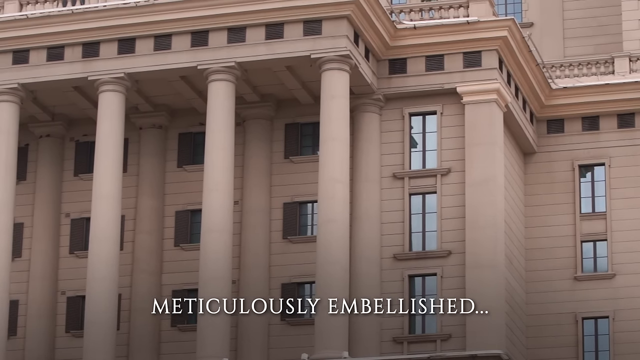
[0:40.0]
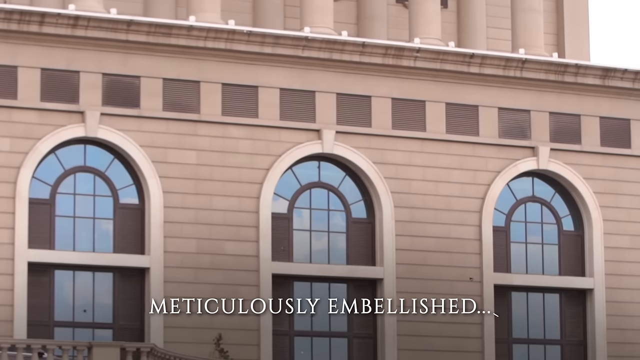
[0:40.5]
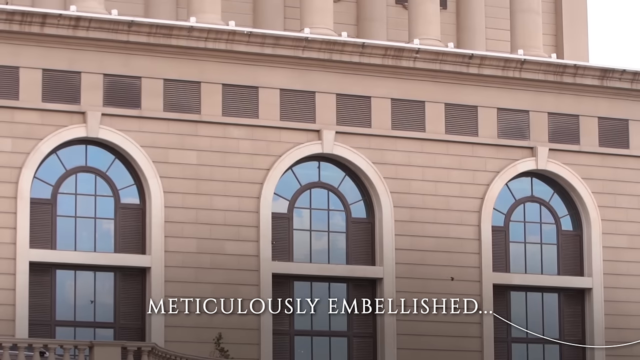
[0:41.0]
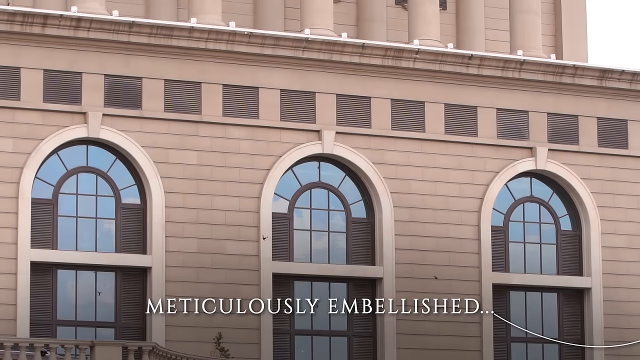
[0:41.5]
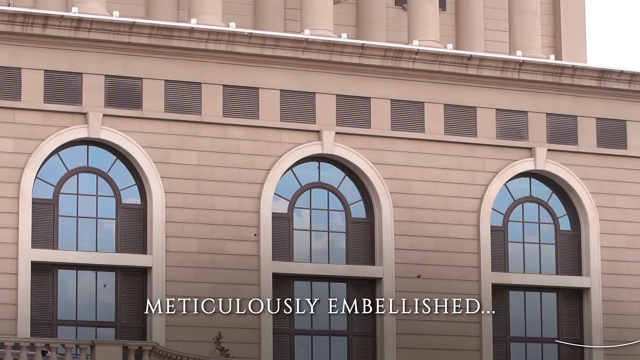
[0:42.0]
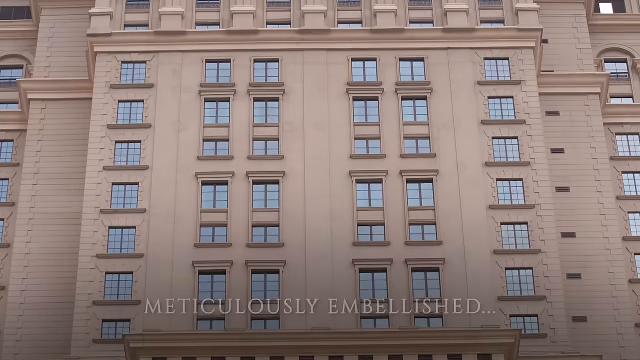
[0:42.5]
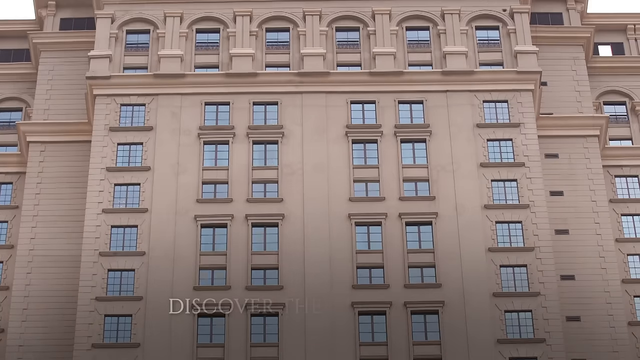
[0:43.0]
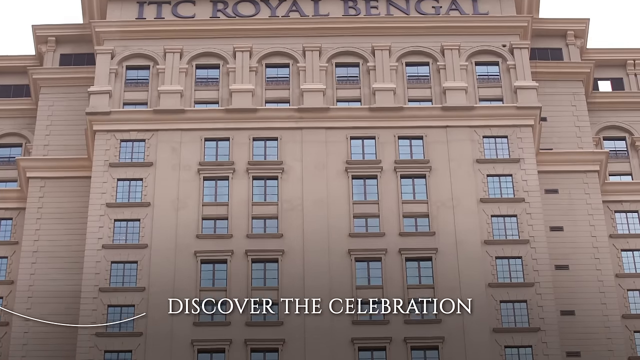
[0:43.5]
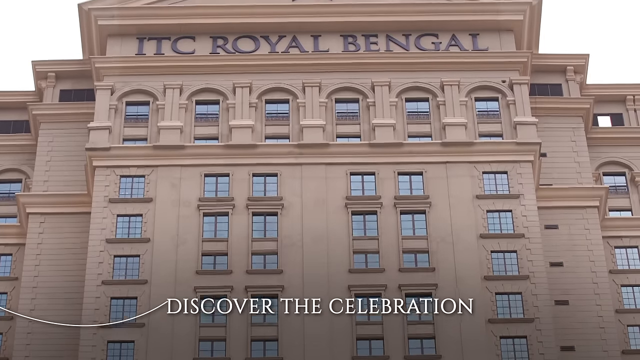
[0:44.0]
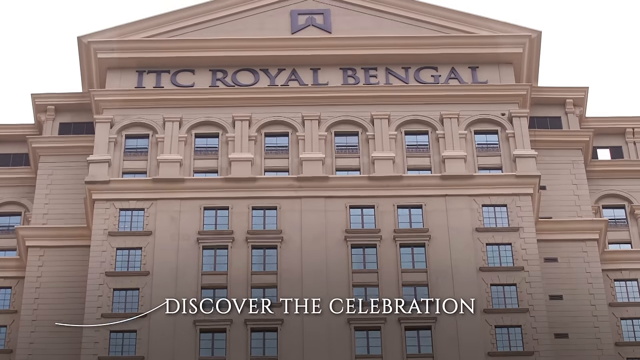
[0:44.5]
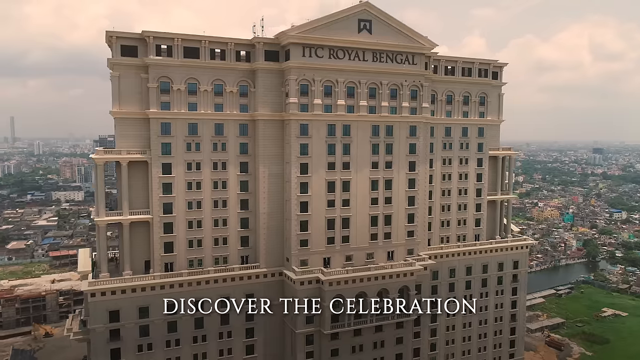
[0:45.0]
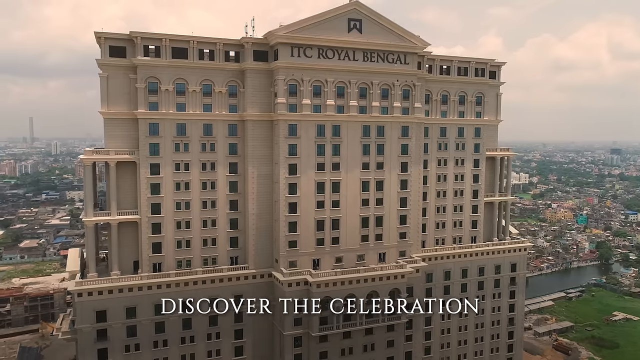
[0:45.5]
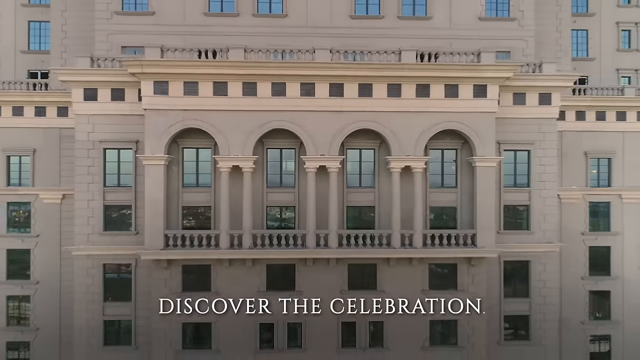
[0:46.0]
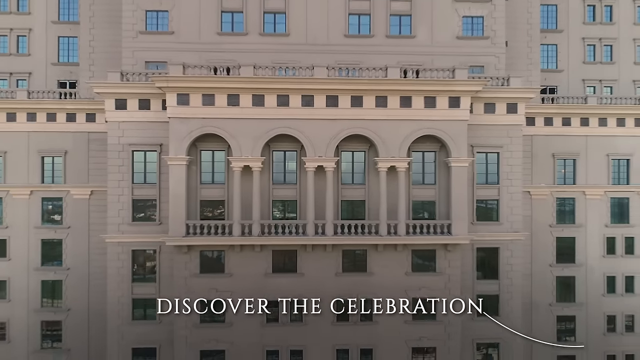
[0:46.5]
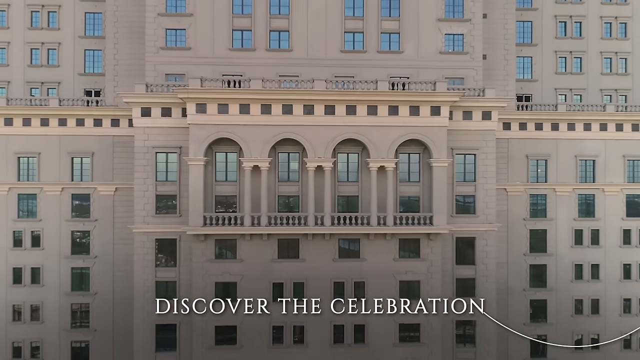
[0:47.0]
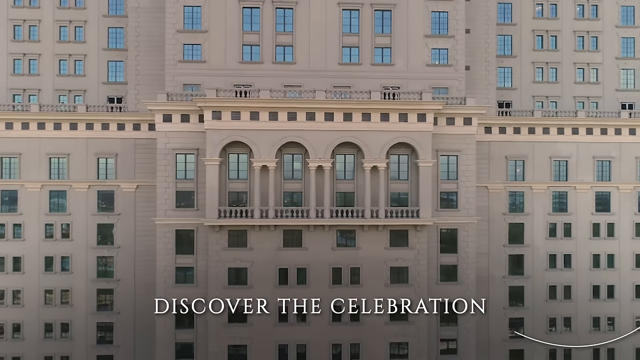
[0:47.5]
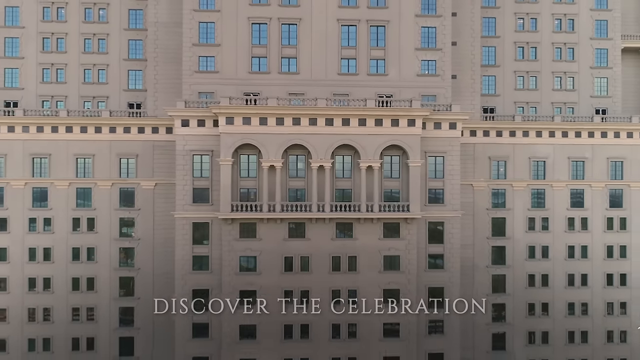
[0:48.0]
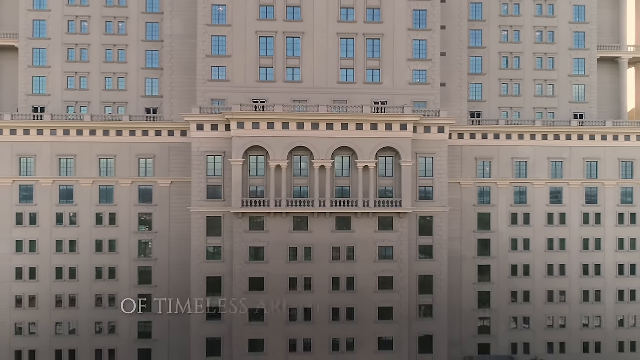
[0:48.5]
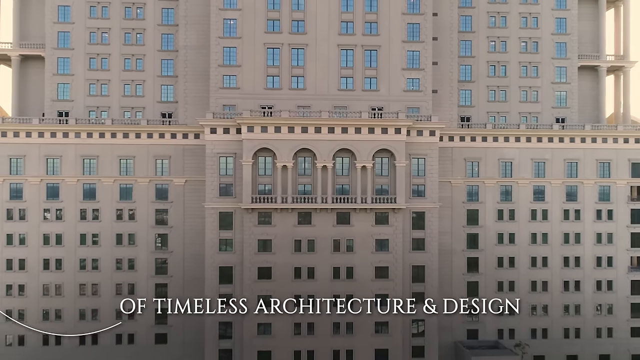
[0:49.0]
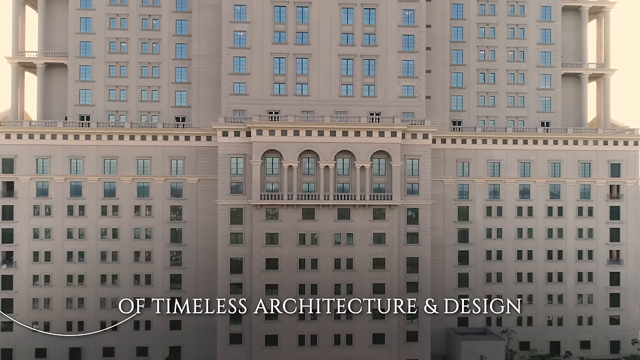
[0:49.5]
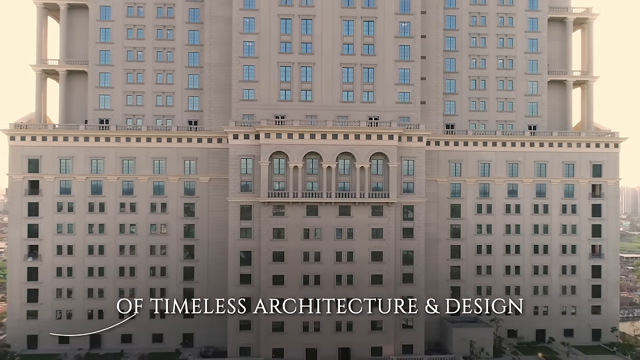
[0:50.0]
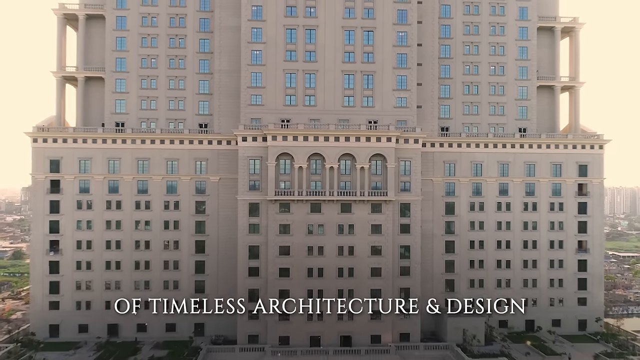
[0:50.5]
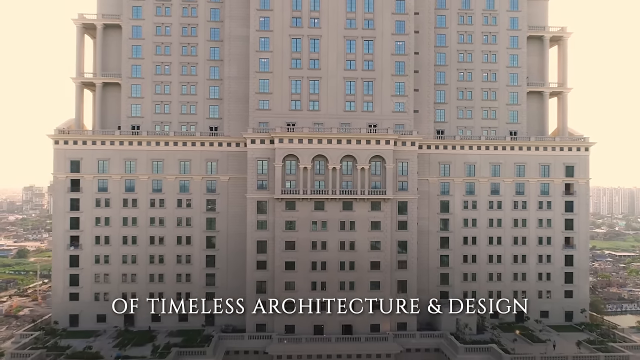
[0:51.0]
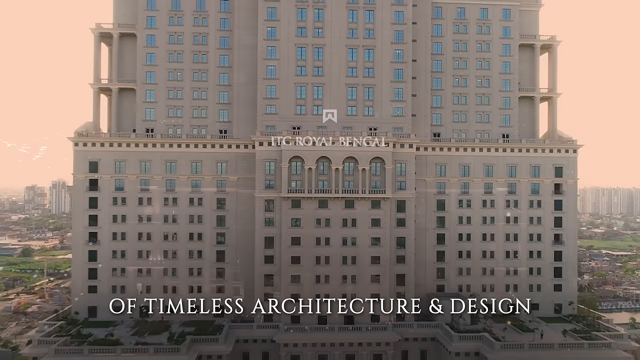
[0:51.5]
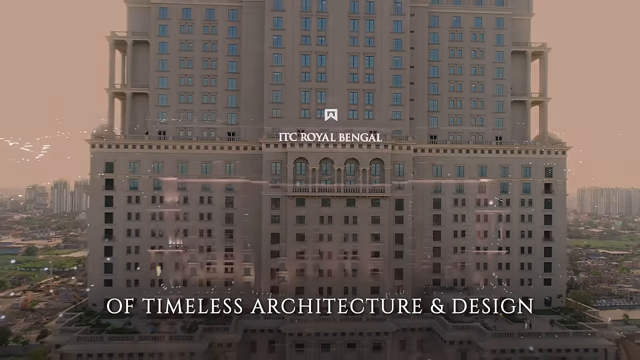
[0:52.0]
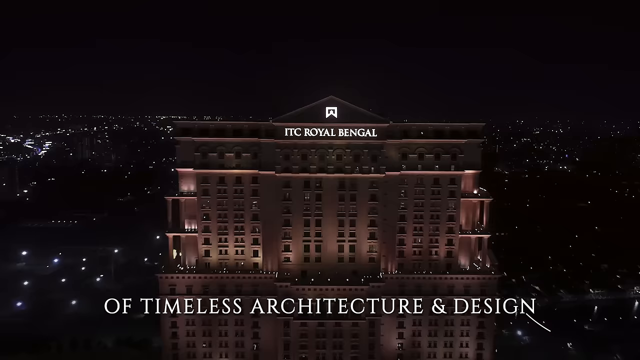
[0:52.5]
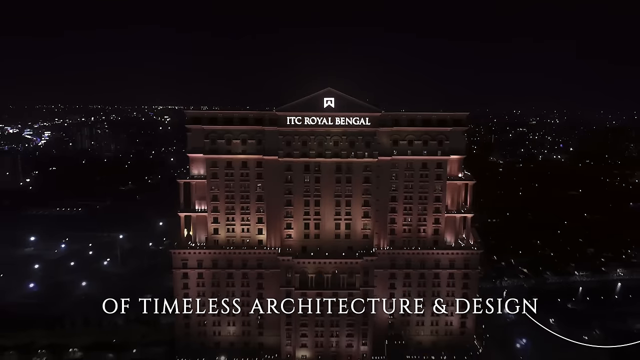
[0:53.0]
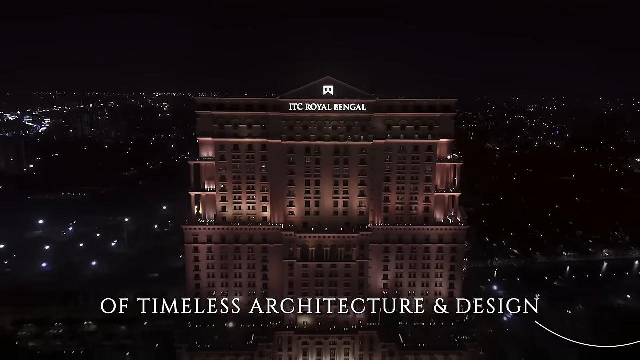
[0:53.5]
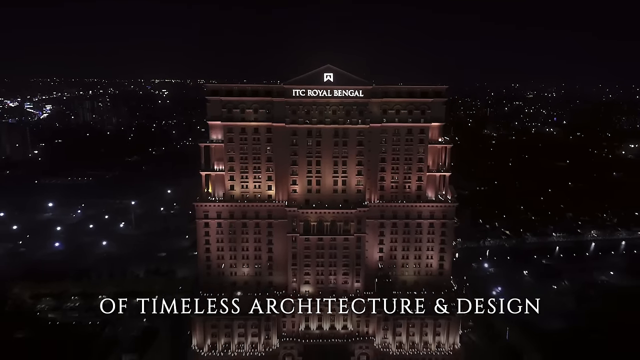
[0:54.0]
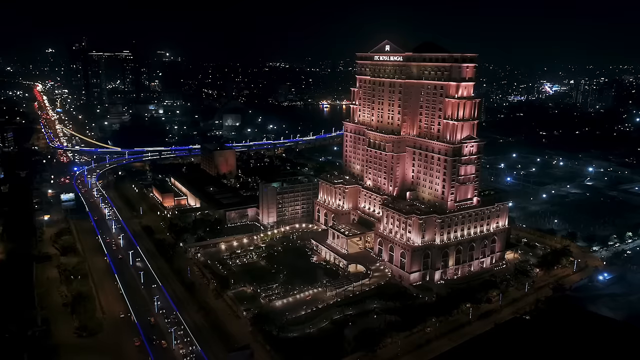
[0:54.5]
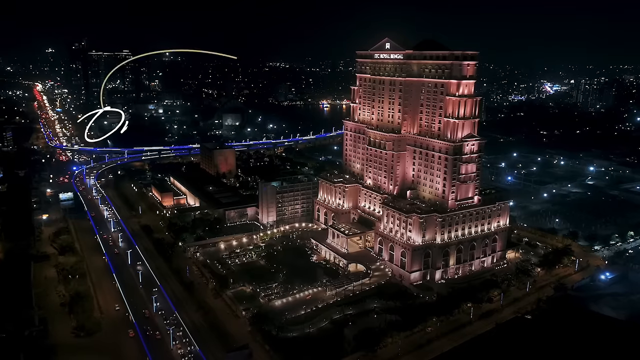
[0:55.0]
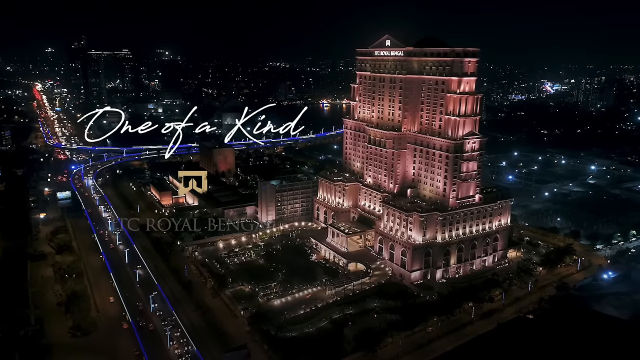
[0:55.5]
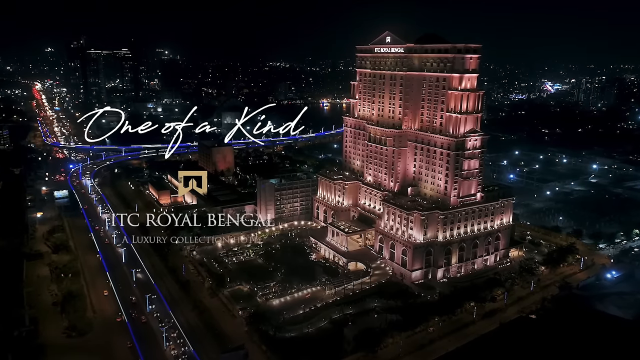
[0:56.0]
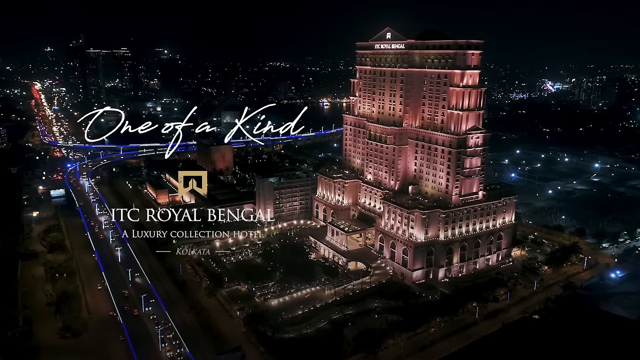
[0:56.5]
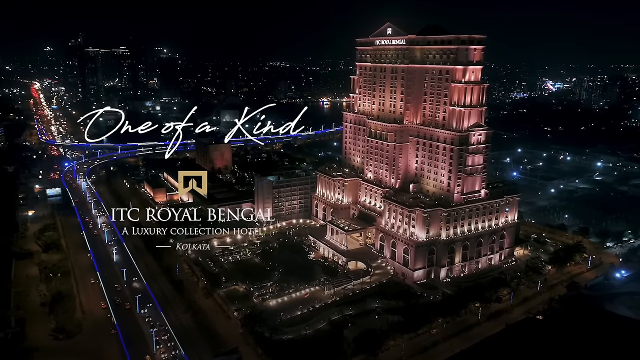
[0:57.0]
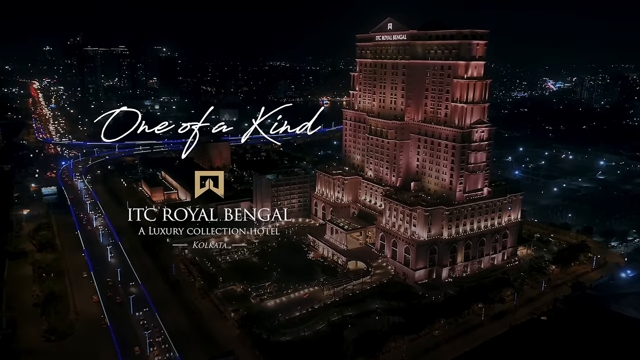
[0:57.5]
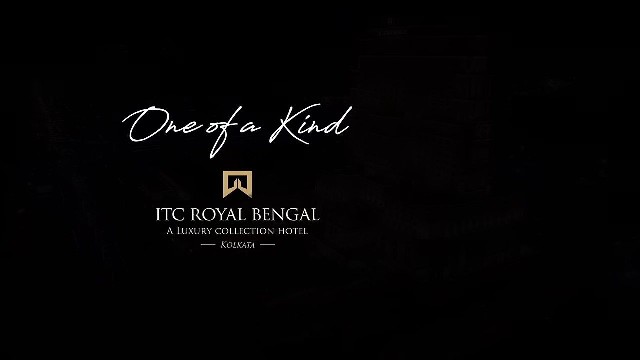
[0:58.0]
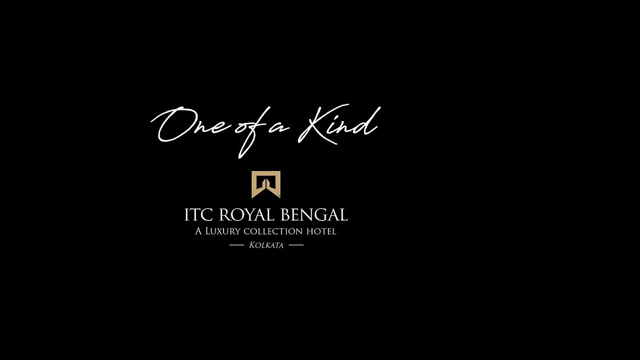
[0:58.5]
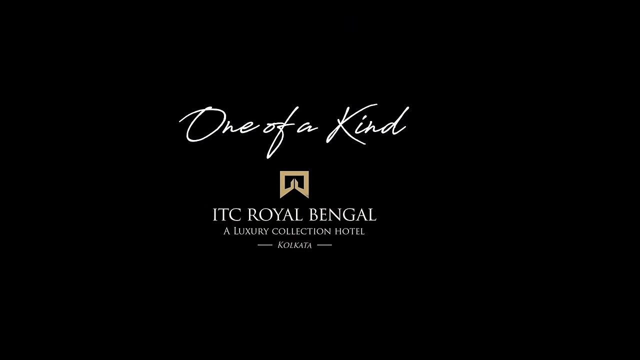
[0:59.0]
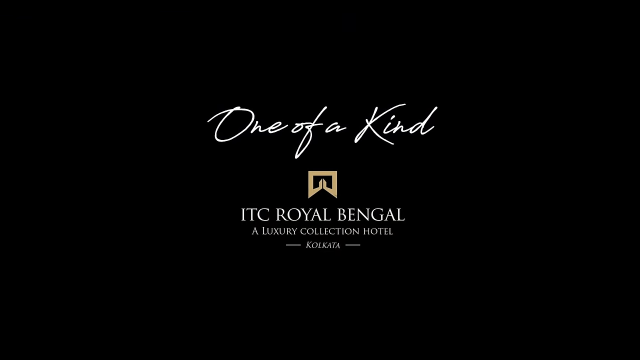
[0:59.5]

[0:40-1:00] The camera zooms in on a tall building, showing its windows. In a new shot, the camera pans upward toward the top as white text appears reading "Discover the celebration." Near the top of the building, text on the building reads "ITC Royal Bengal," showing that it is some kind of hotel or resort. A drone shot then zooms slowly outward away from the hotel, with white text at the very bottom reading "of timeless architecture and design," and the view continues panning outward. It transitions into a similar shot from the sky showing the hotel at night; it is lit up and looks dark or brown. At the very top, each individual letter of the hotel's lettering is lit up, still reading "ITC Royal Bengal," and the text "of timeless architecture and design" is still at the bottom. Finally, the aerial view zooms back in on the hotel and new text appears reading "One of a kind, ITC Royal Bengal, a luxury collection hotel, Kolkata."